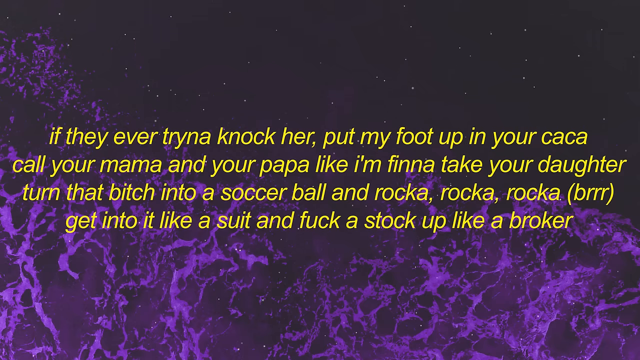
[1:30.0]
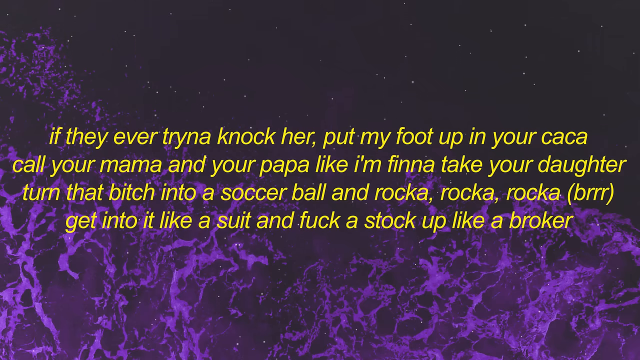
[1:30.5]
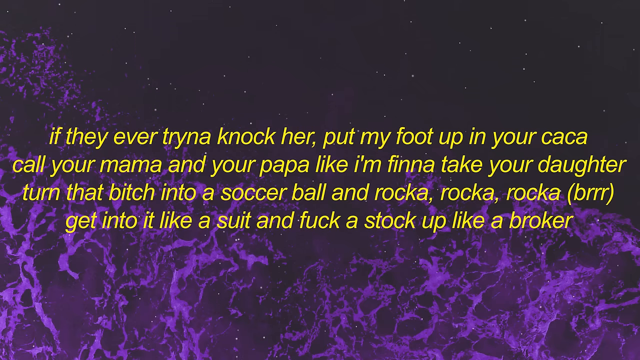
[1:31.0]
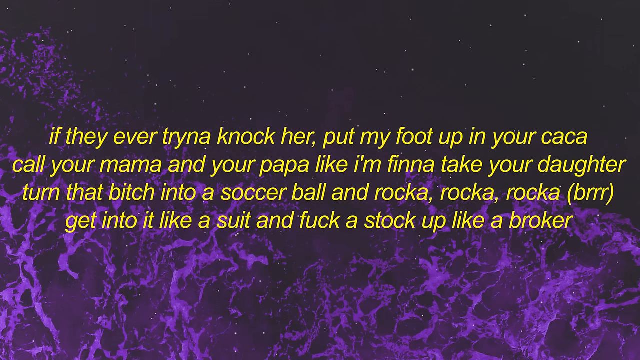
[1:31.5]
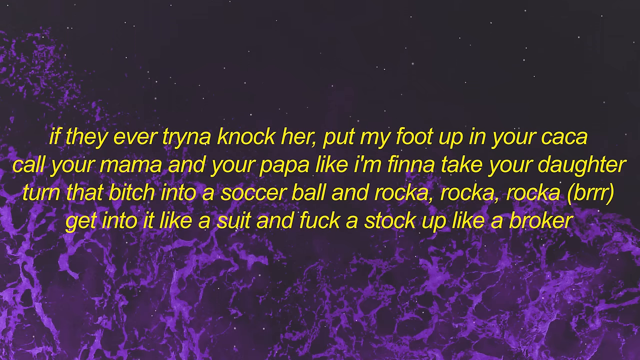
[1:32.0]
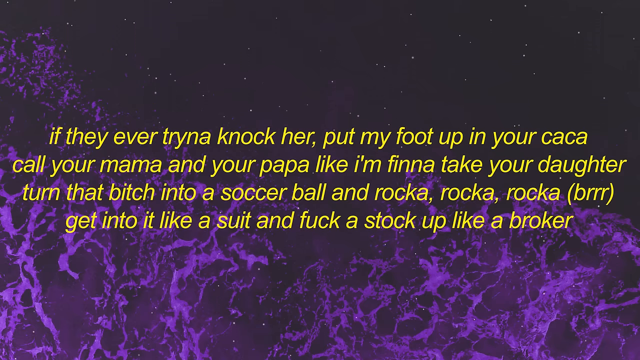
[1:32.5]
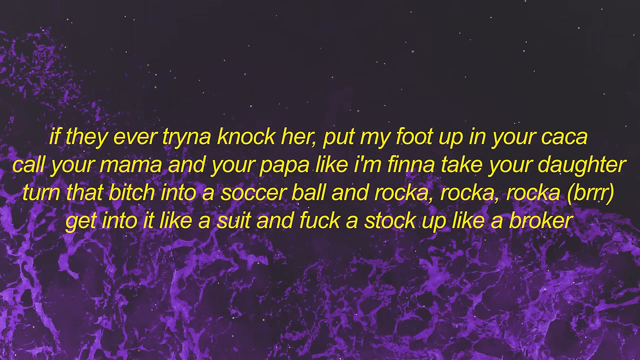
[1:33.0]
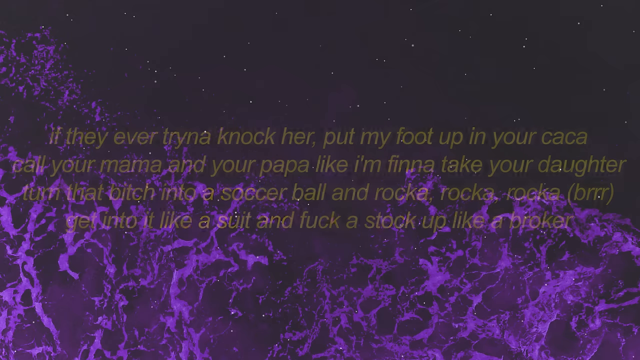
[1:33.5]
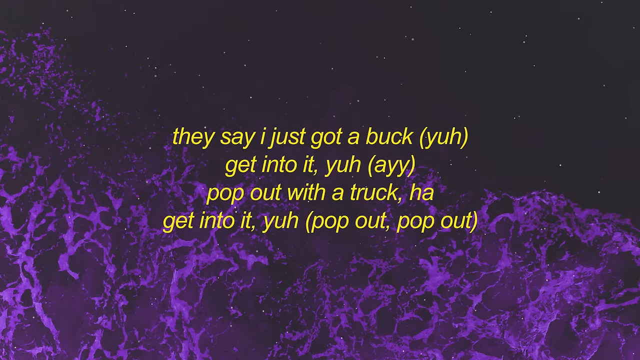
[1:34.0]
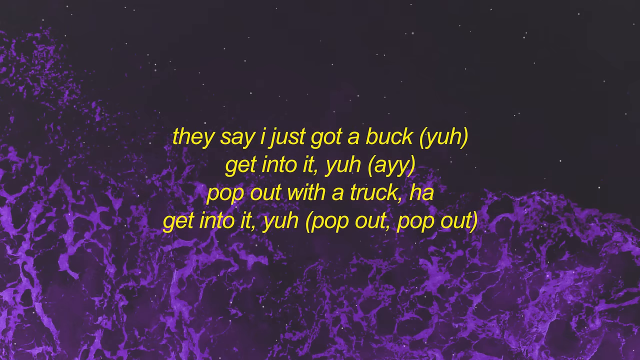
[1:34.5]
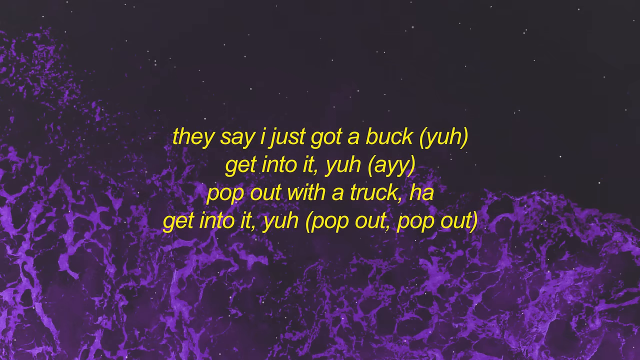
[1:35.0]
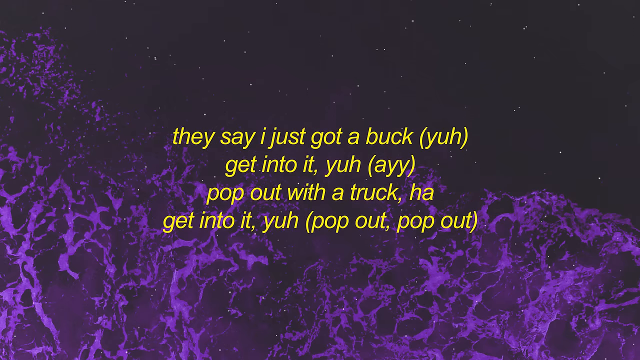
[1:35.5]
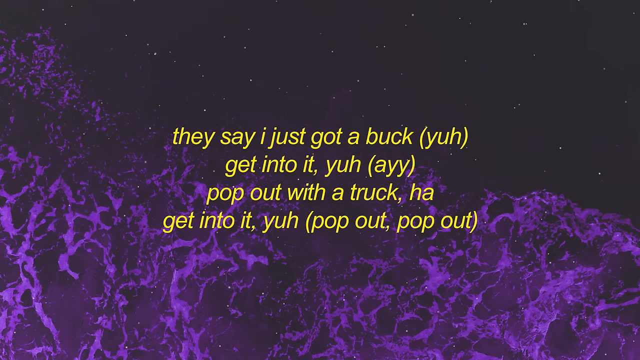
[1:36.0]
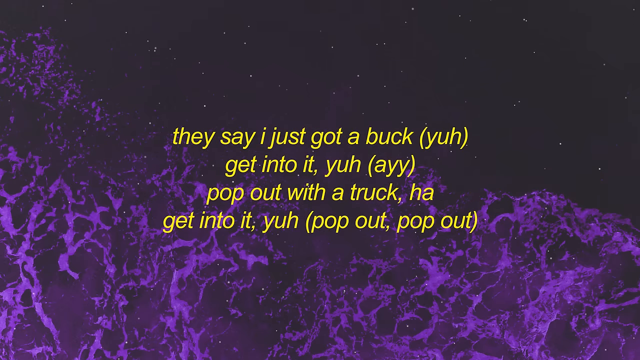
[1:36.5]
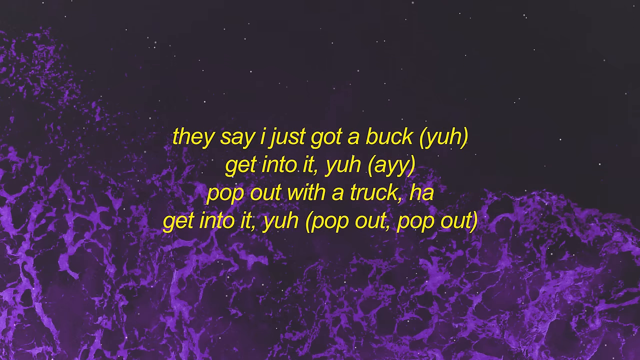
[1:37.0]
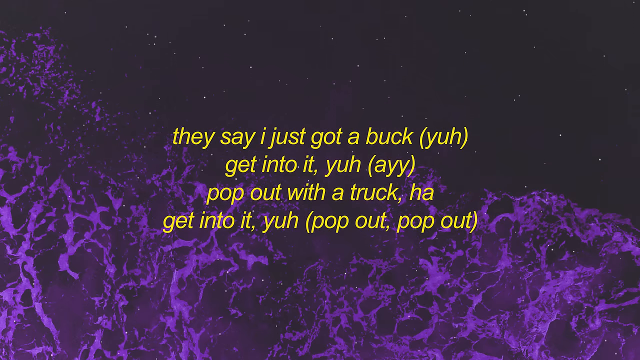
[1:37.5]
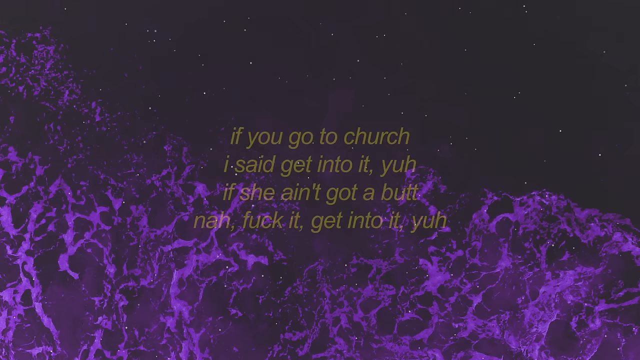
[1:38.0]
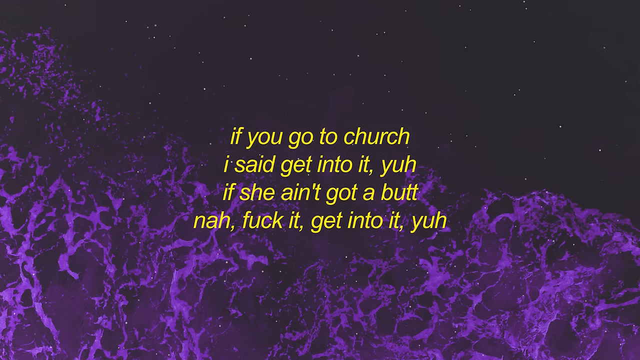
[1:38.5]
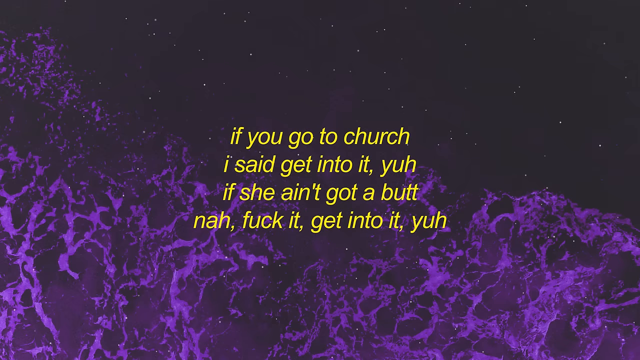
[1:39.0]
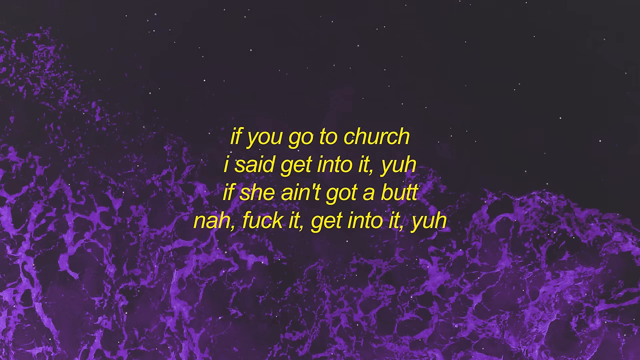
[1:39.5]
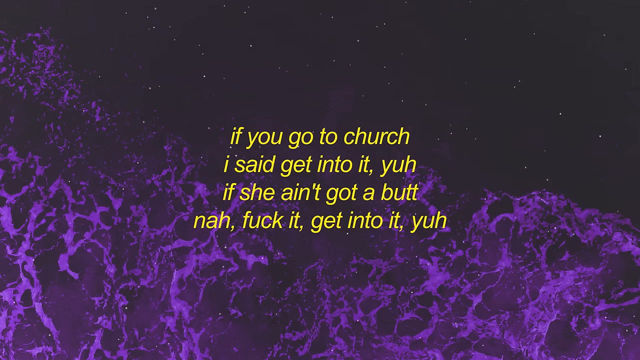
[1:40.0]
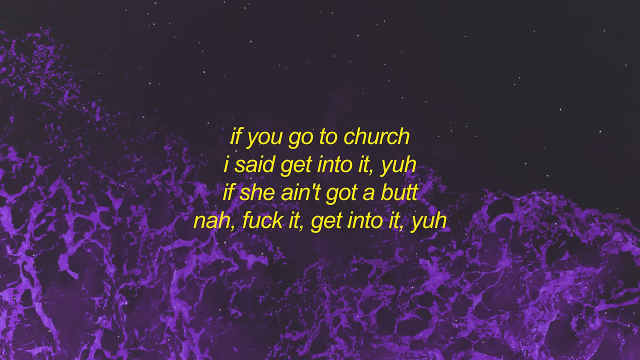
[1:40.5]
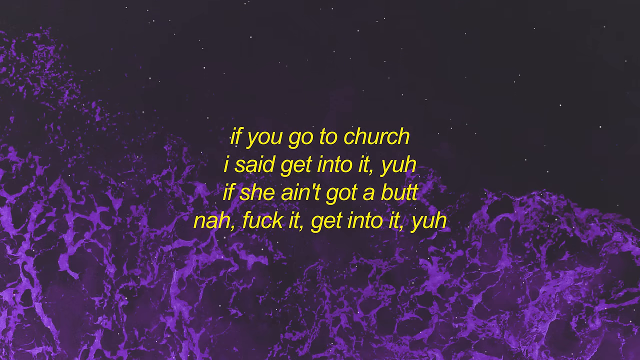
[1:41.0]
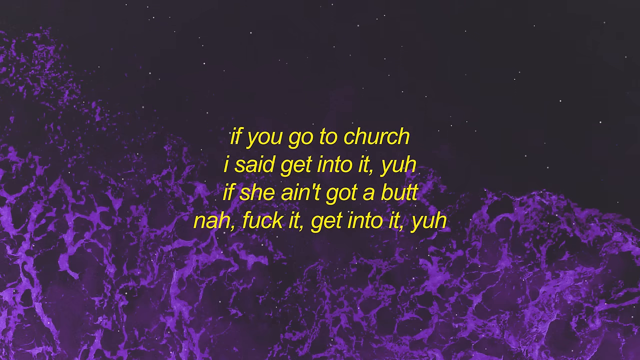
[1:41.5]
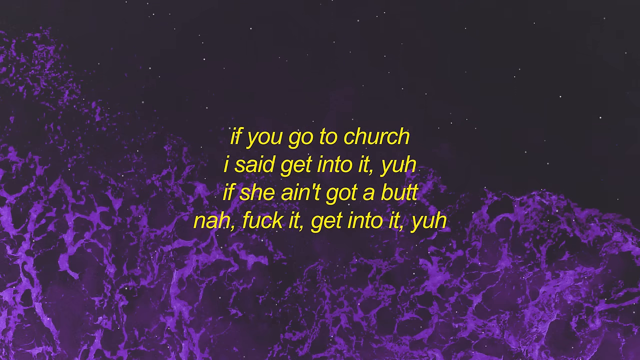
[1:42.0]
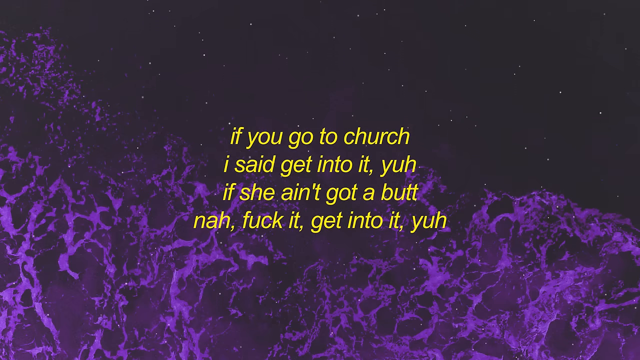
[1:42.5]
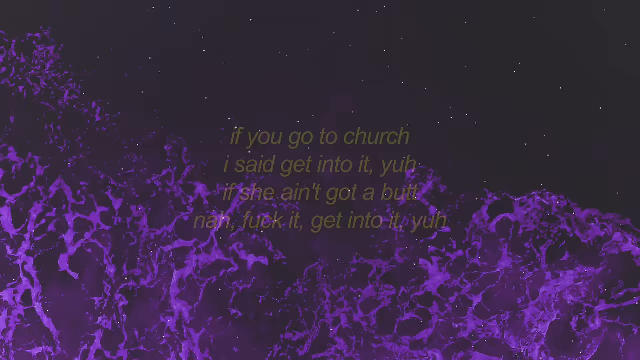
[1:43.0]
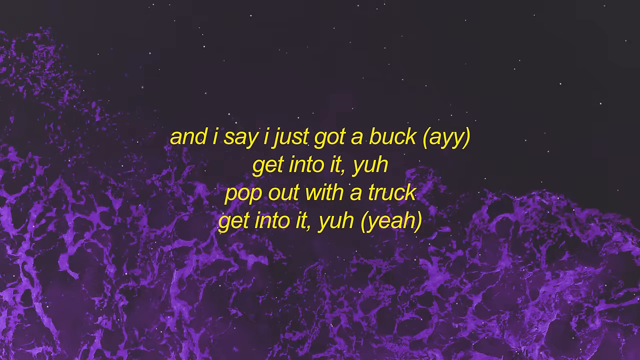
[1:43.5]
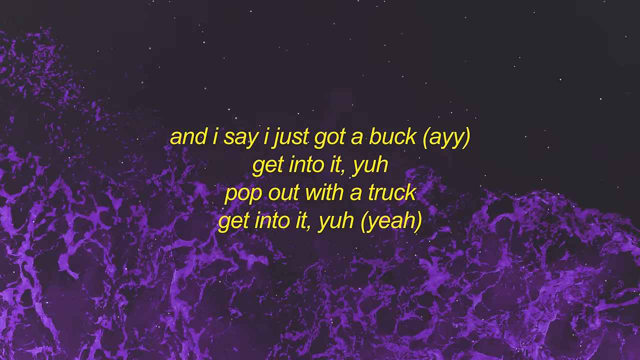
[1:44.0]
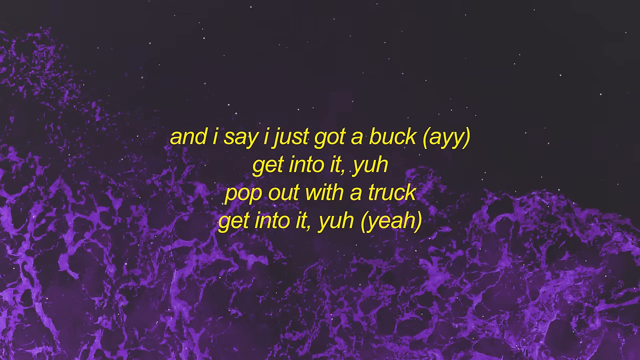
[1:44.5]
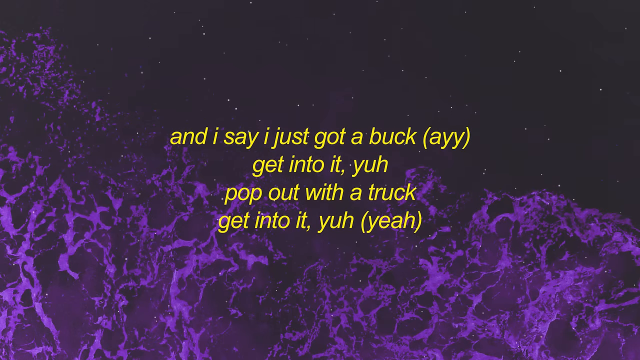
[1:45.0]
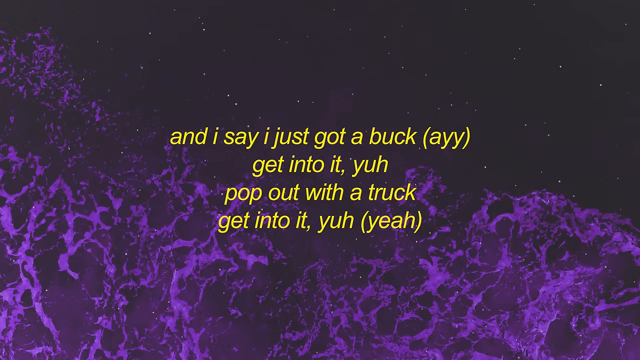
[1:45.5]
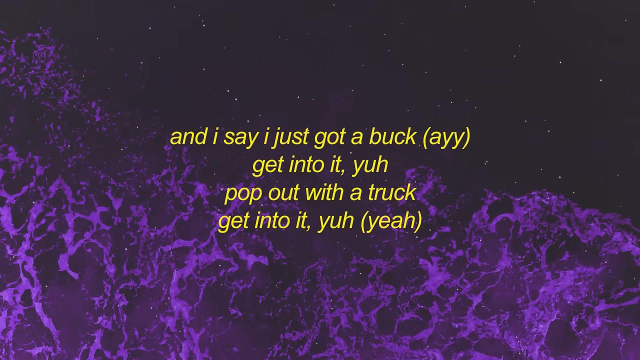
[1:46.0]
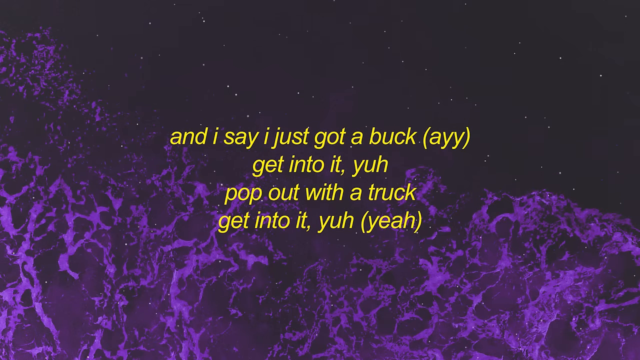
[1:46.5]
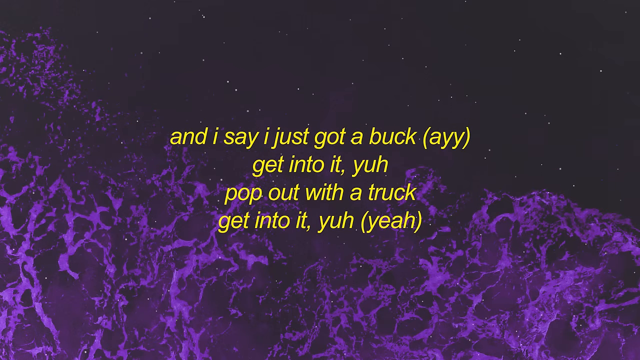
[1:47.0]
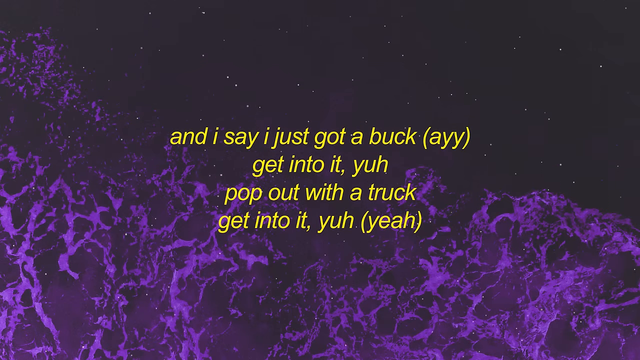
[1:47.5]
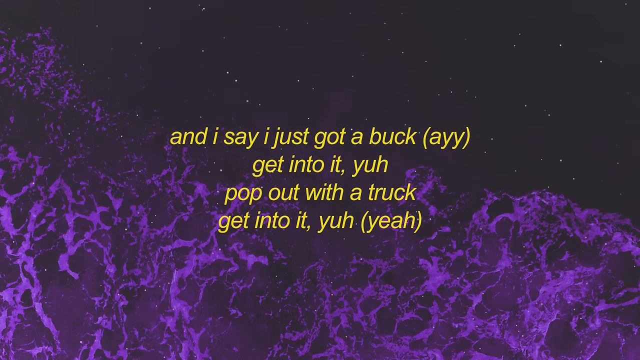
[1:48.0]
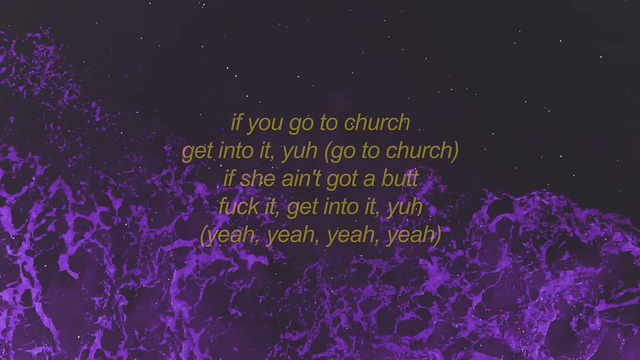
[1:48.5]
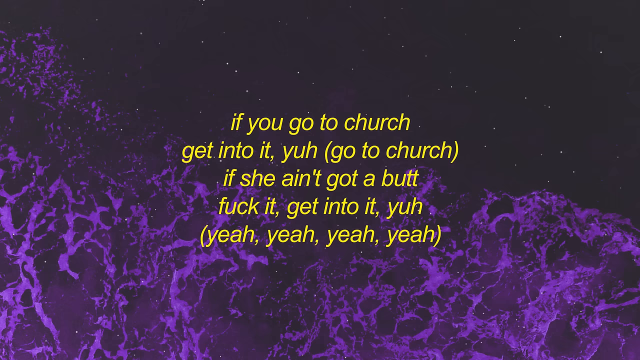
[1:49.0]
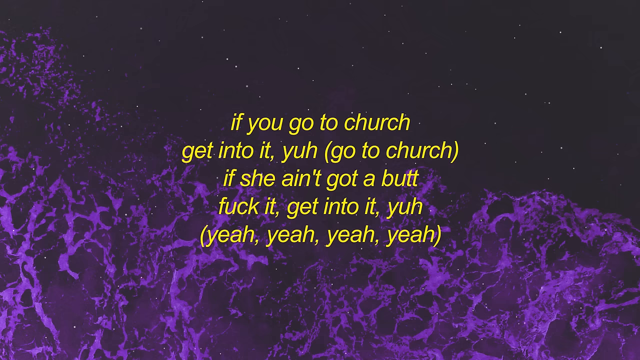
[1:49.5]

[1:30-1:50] Song lyrics are displayed in yellow font on a black background with a little bit of purple waves. The text reads "if they ever trying to knock her put my foot up your caca Call your mama and your papa like I'm fine I take your daughter turn that bitch into a soccer ball" and continues with "get into it like a suit and fuck a stack up like a broker." Next come "they say I got a buck. Yeah get into it. Yeah a Pop out with a truck. Ha get into it. Yeah pop out pop out," then "if you go to church I said get into it. Yeah, if she ain't got a butt now, fuck it get into it Yeah," and "and I say I just got a buck a get into it. Yeah pop out with a truck get into it. Yeah. Yay." The lyrics continue through the song.